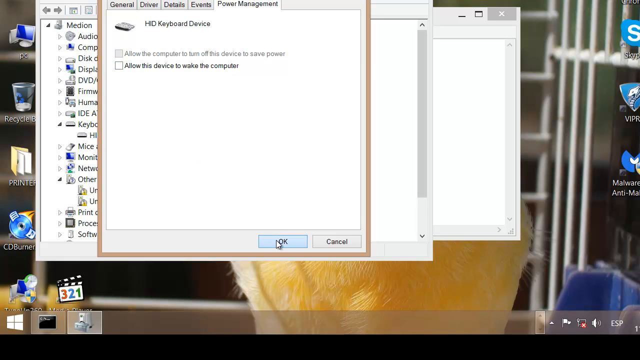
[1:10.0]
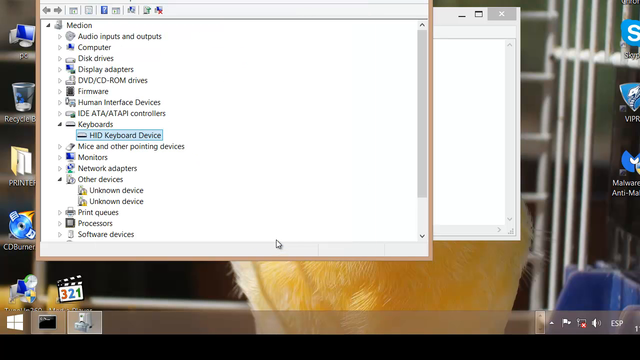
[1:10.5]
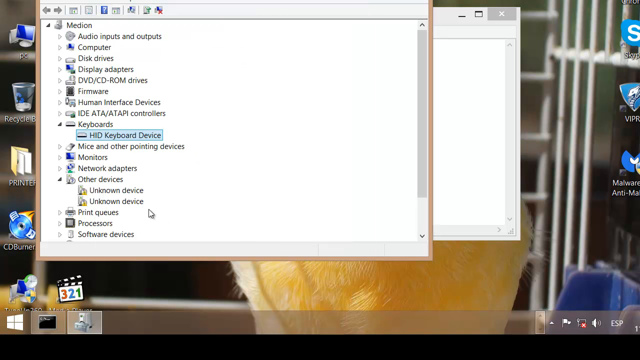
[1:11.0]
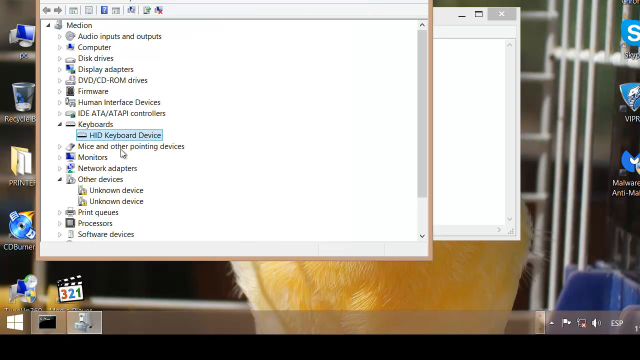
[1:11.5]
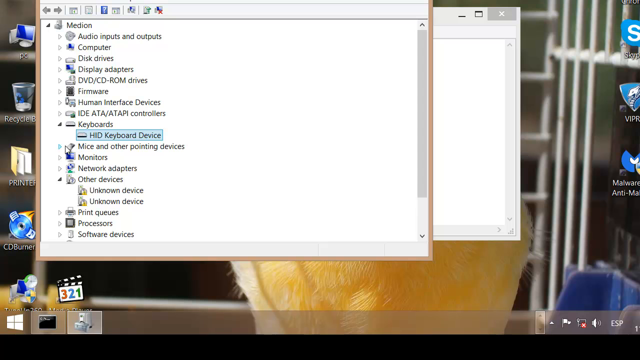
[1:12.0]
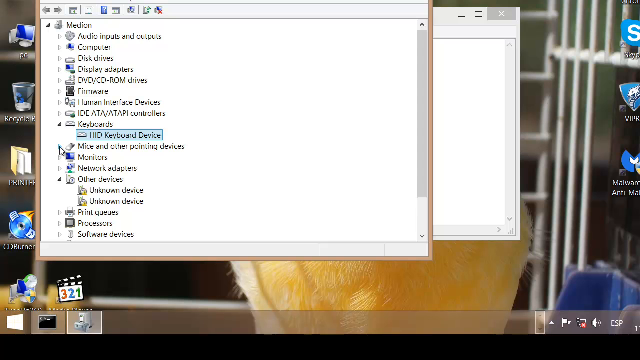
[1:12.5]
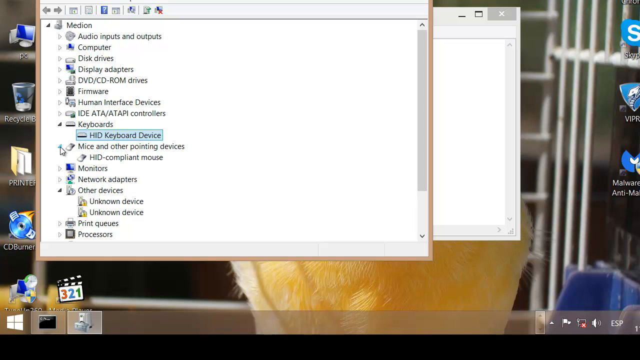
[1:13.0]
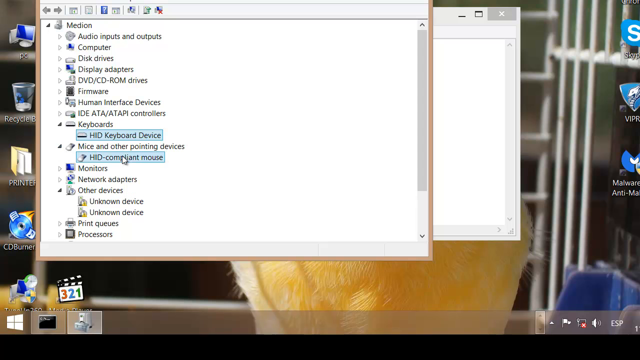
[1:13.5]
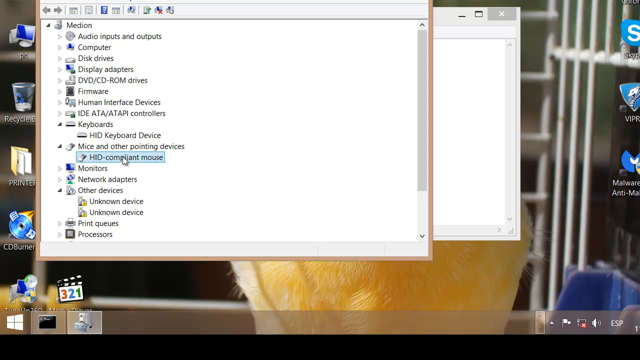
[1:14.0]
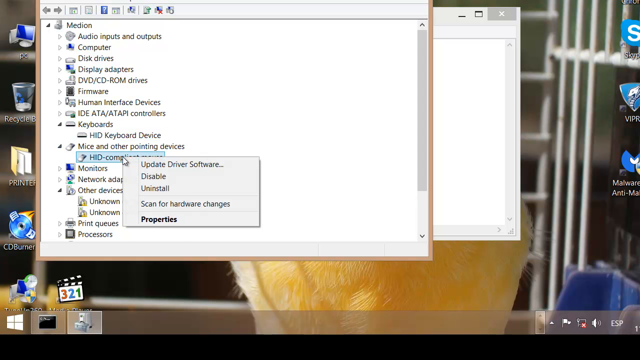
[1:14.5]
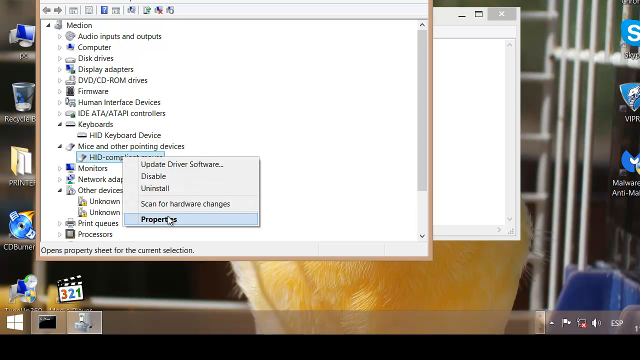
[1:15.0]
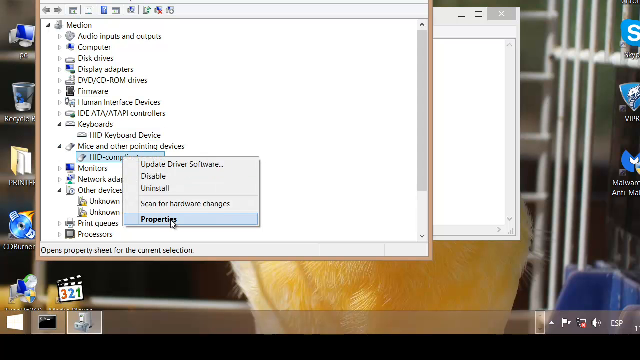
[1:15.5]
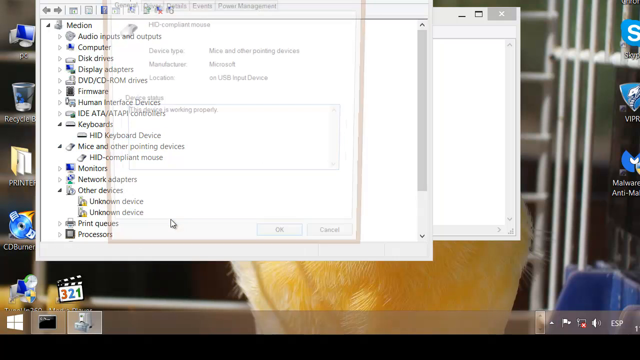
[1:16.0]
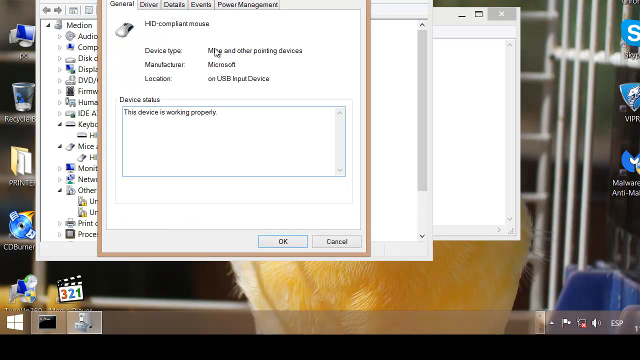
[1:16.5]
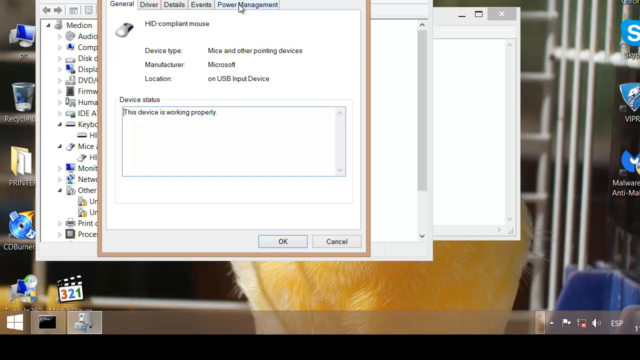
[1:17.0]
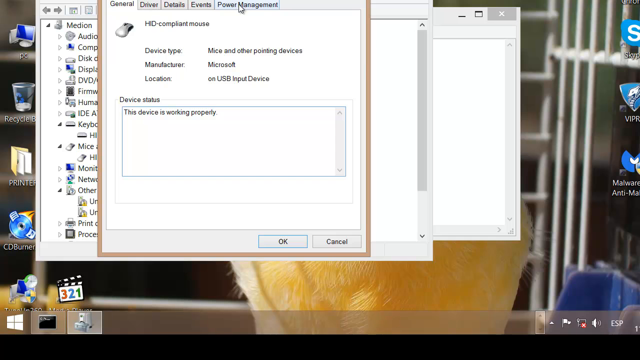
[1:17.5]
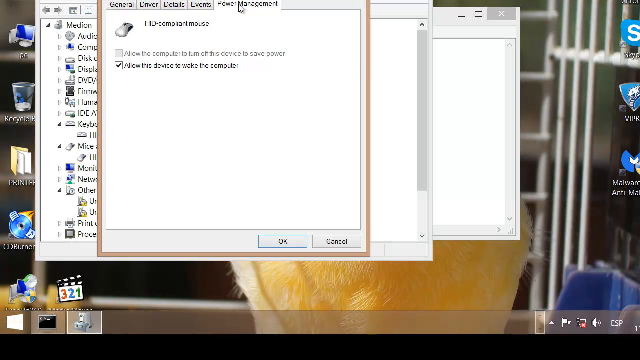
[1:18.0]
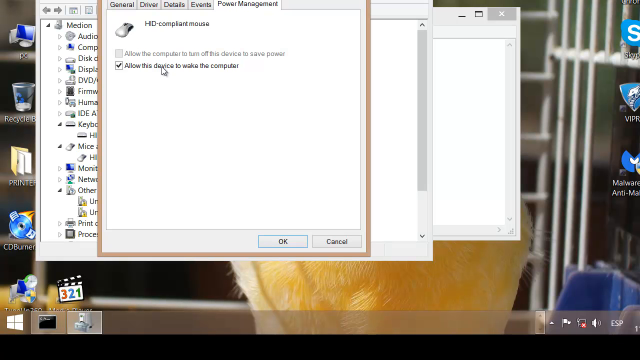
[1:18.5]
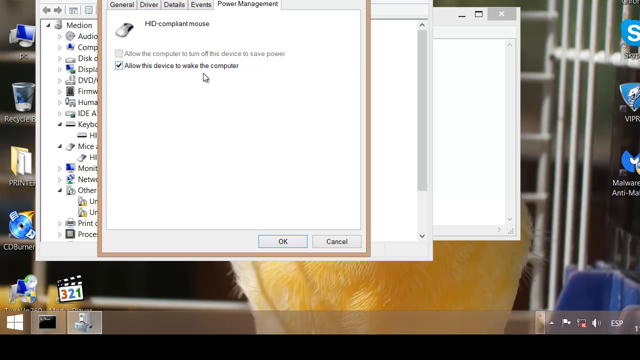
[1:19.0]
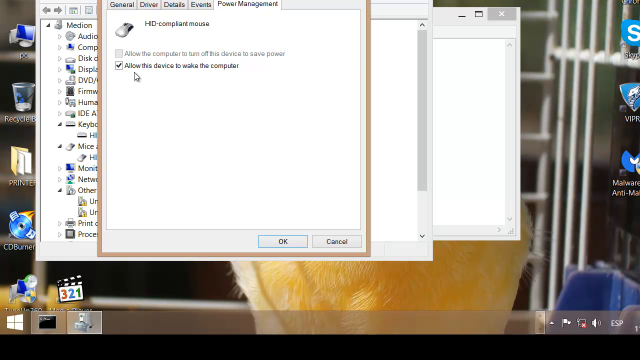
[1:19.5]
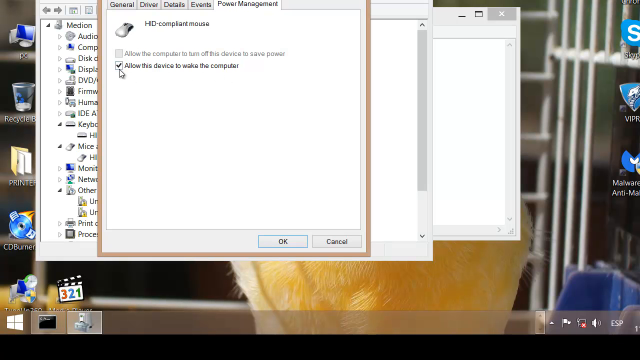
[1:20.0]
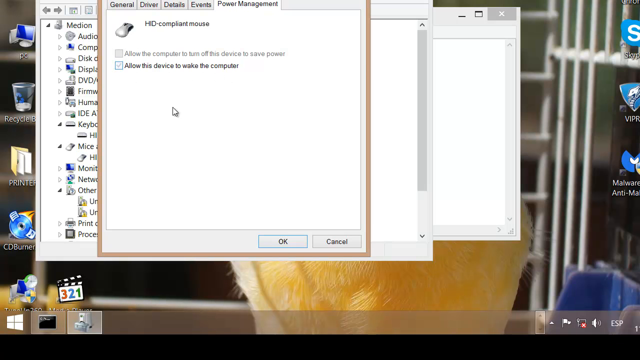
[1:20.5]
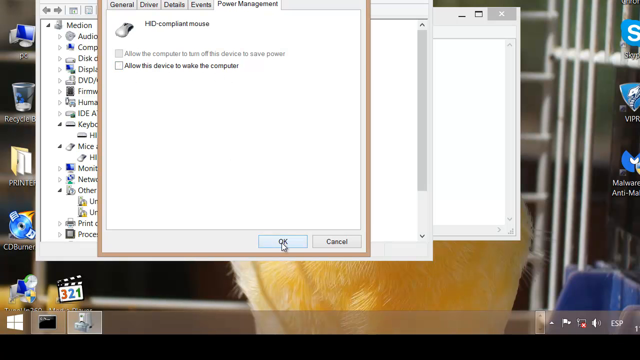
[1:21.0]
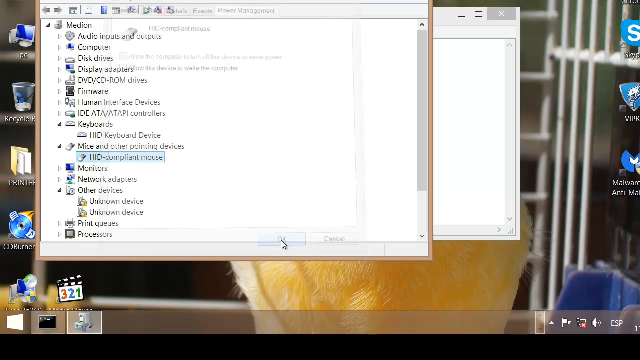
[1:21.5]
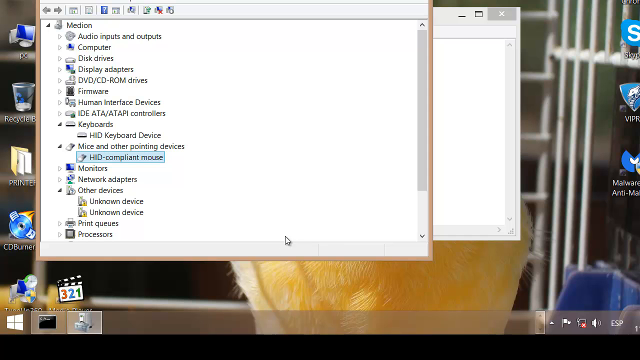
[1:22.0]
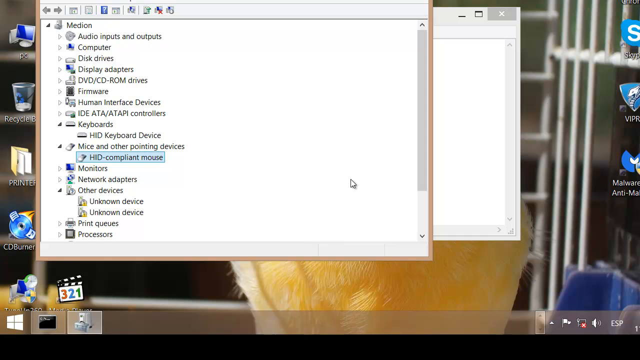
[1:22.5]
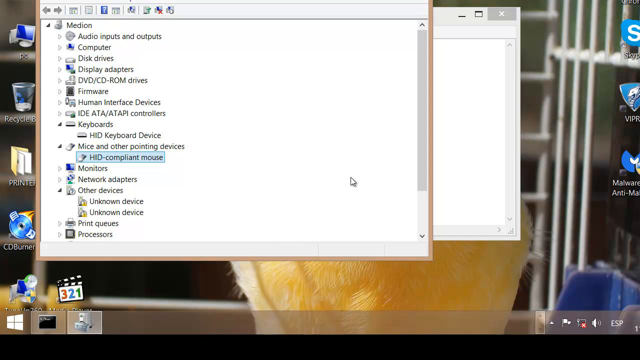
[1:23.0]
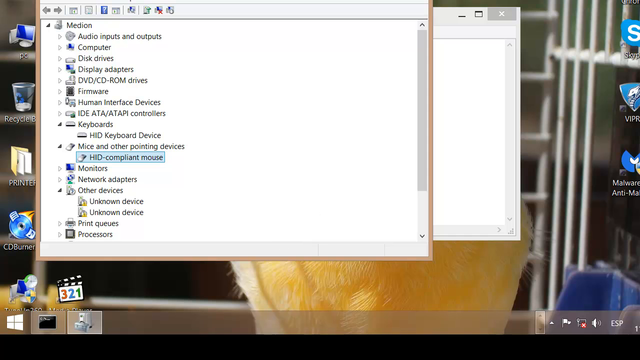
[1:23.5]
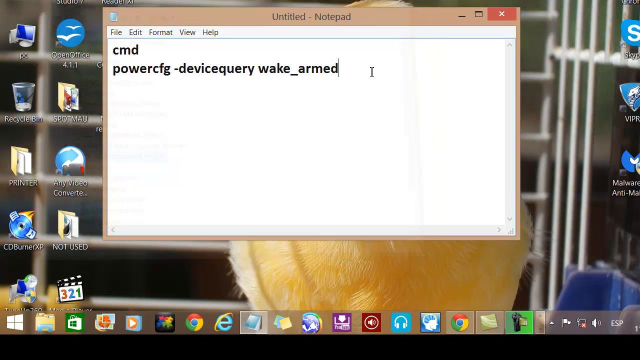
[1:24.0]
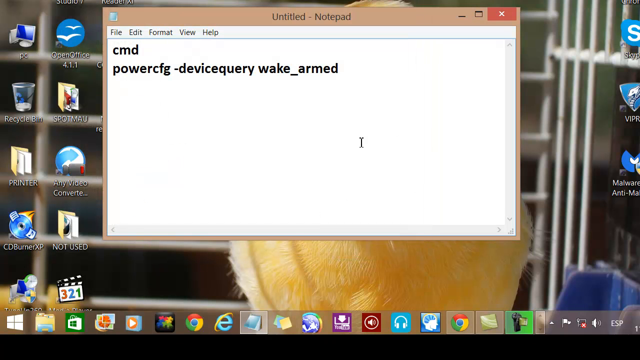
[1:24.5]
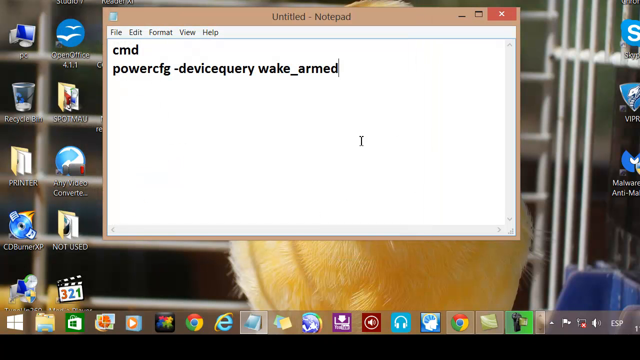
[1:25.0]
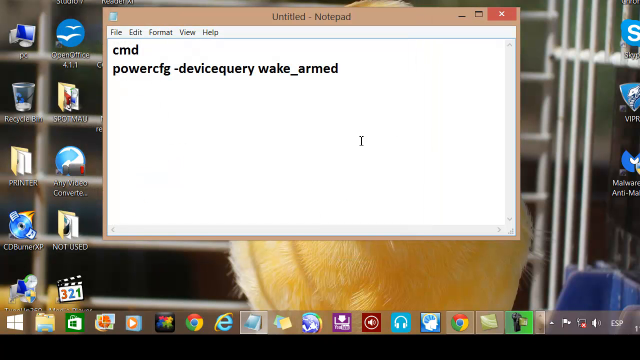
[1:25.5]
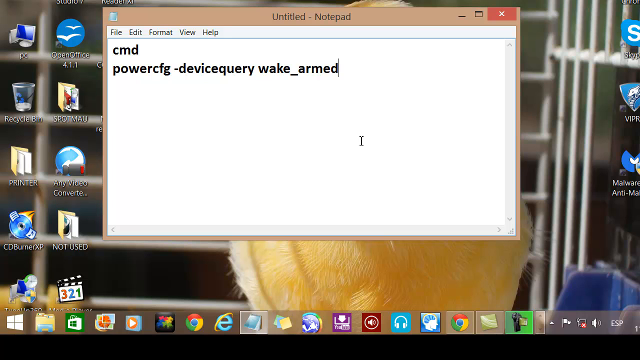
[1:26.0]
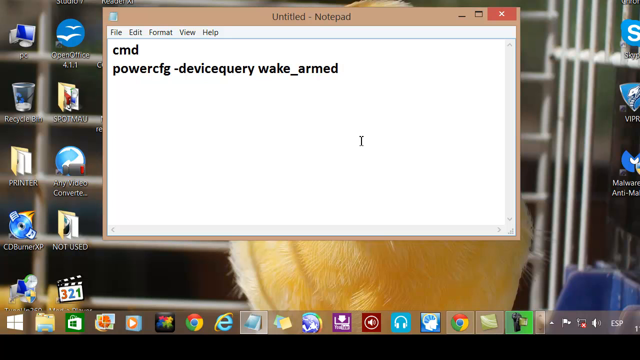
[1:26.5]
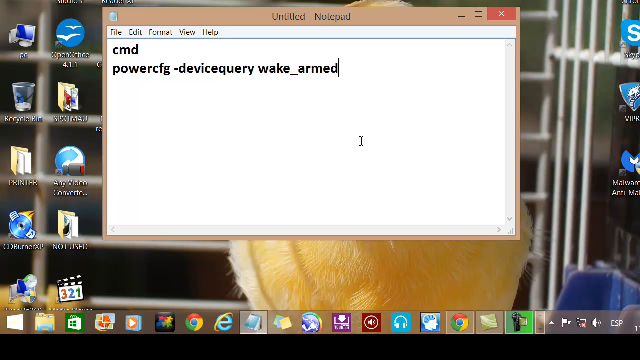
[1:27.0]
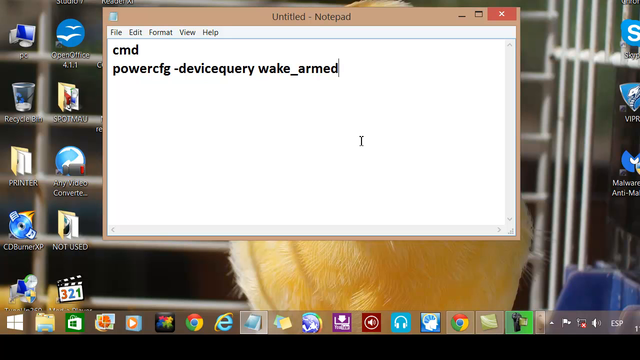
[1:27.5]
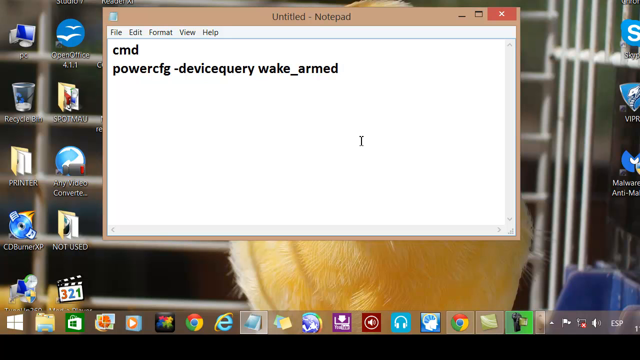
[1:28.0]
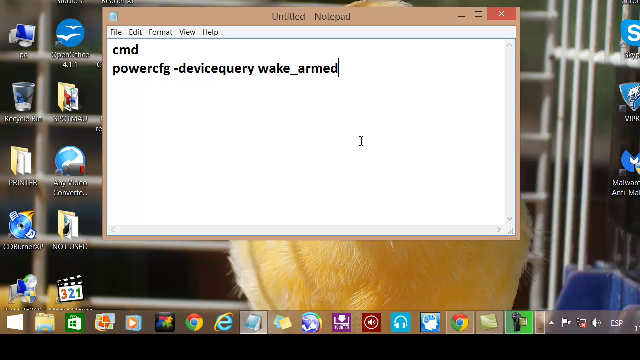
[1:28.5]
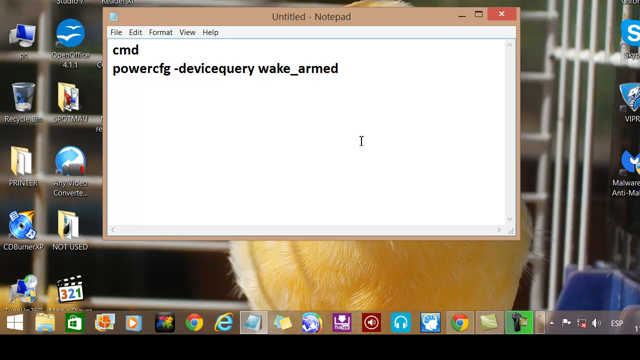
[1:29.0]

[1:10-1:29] The tutorial continues with a command prompt for a device query wake up being entered. The person slowly moves through the device manager settings, comes down to the mouse, and clicks on Properties. With deliberate cursor movements, the Power Management tab is clicked. The cursor then slowly moves down to a checkbox for "allow this device to wake up the computer", which is unchecked and confirmed with an OK. Everything is very slow and deliberate. The desktop stays unchanged, with icons on the desktop, many icons along the taskbar, and what appears to be a yellow duck or bird as the wallpaper behind the untitled notepad, which still has the original command prompt on it.